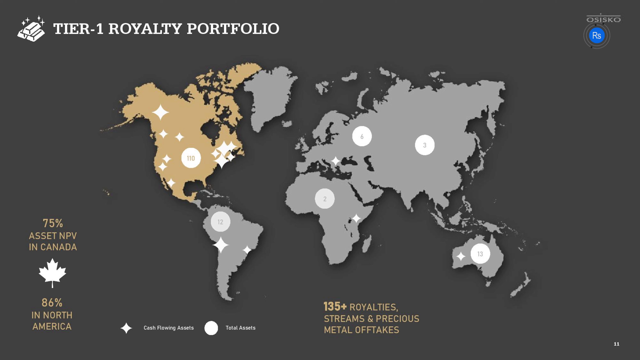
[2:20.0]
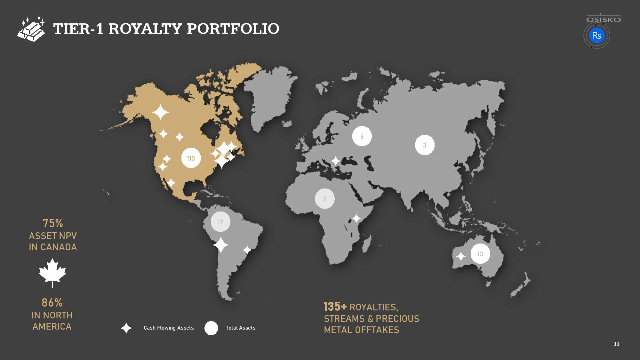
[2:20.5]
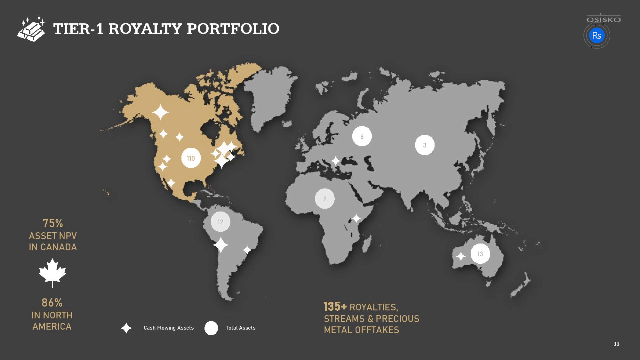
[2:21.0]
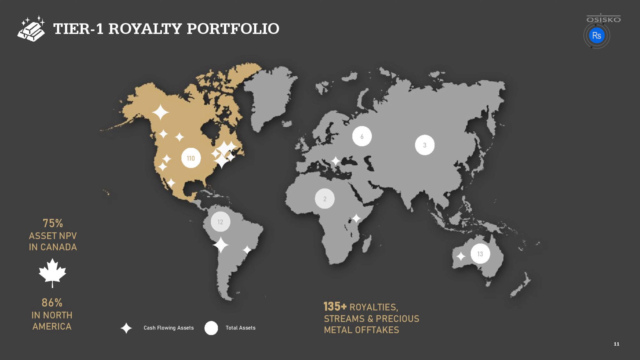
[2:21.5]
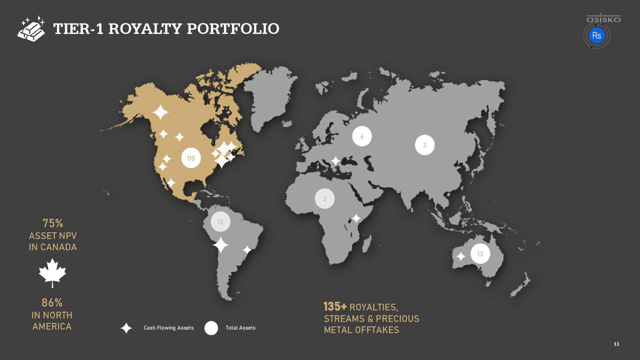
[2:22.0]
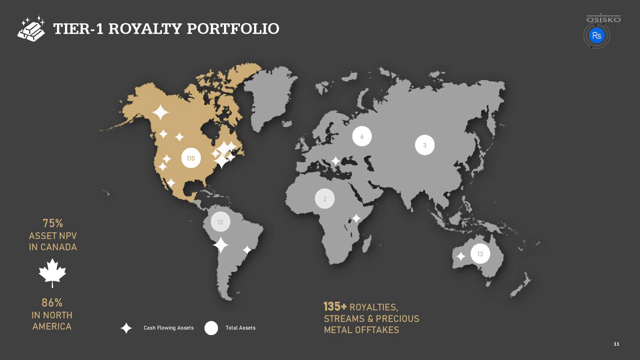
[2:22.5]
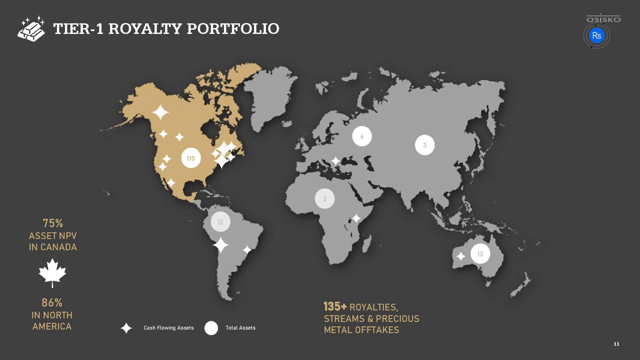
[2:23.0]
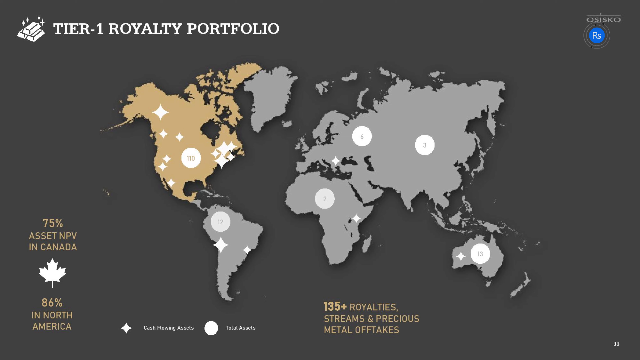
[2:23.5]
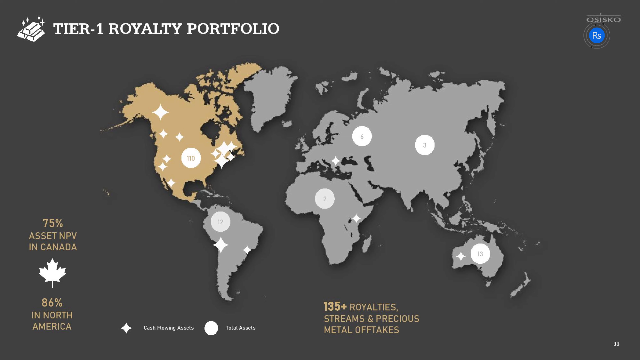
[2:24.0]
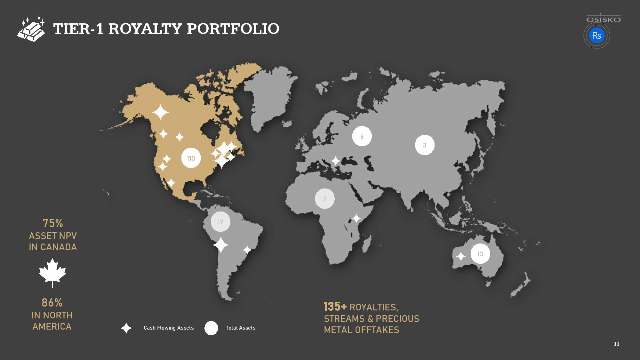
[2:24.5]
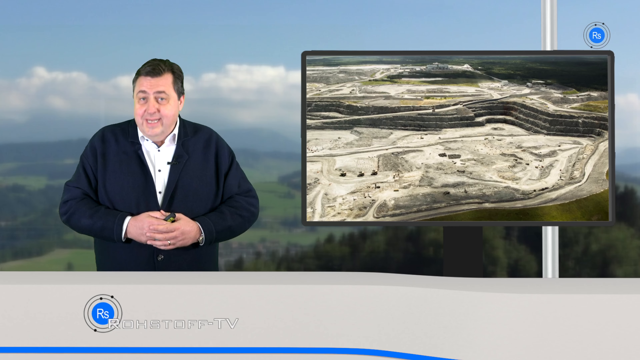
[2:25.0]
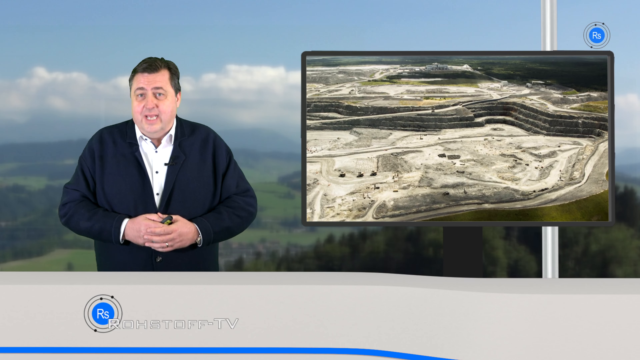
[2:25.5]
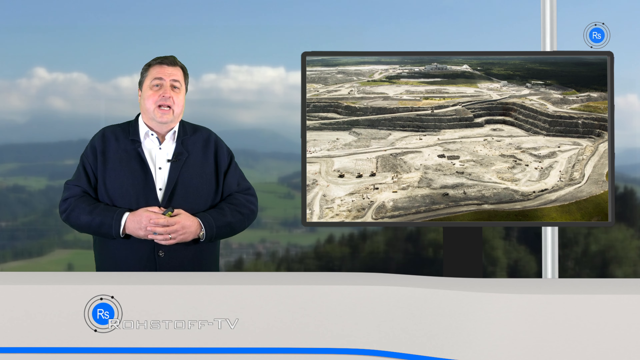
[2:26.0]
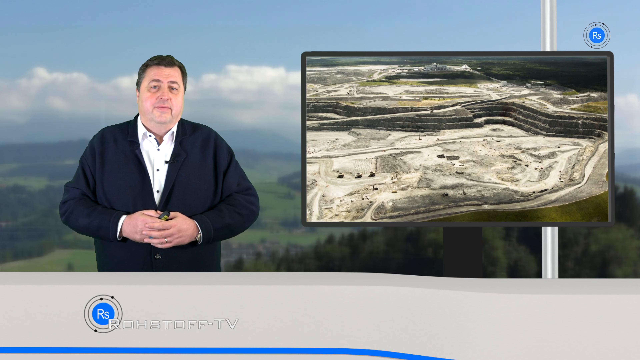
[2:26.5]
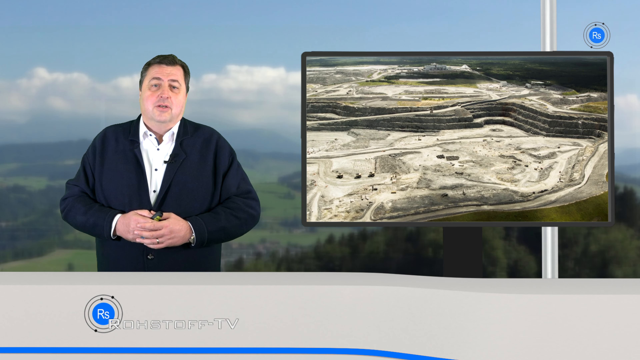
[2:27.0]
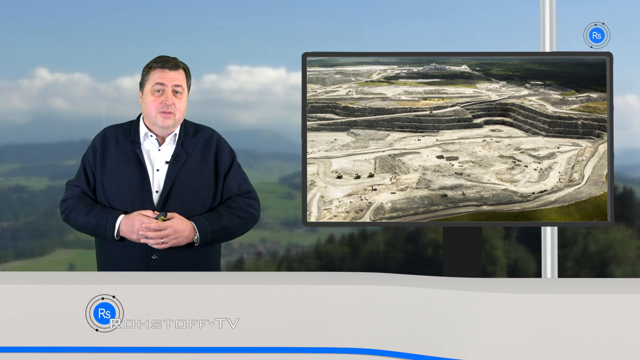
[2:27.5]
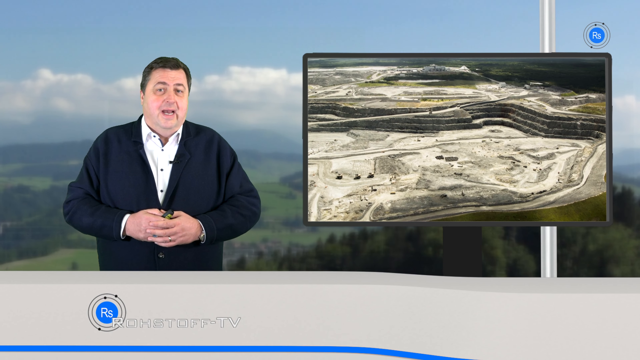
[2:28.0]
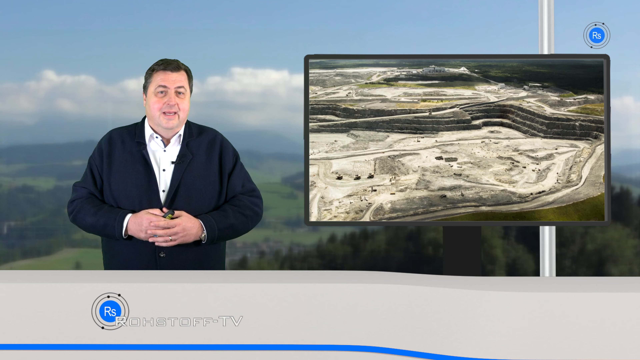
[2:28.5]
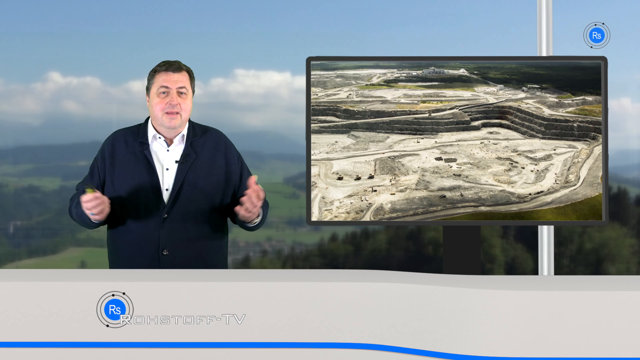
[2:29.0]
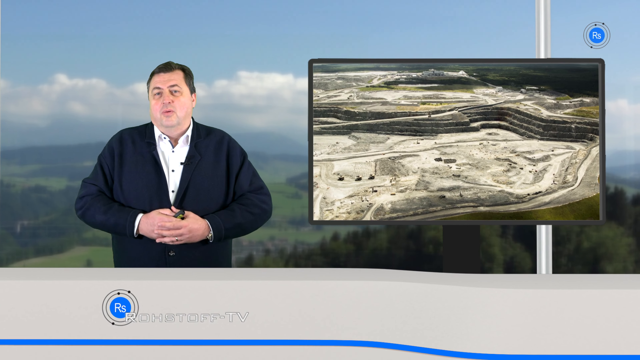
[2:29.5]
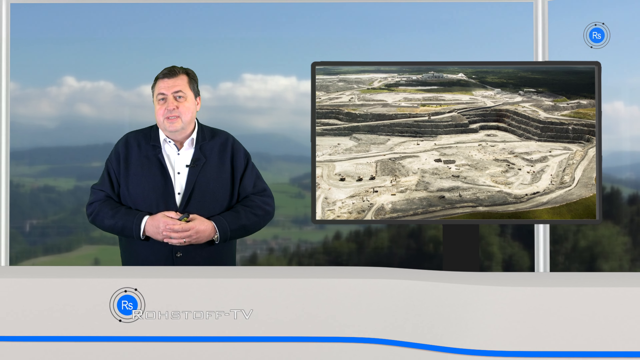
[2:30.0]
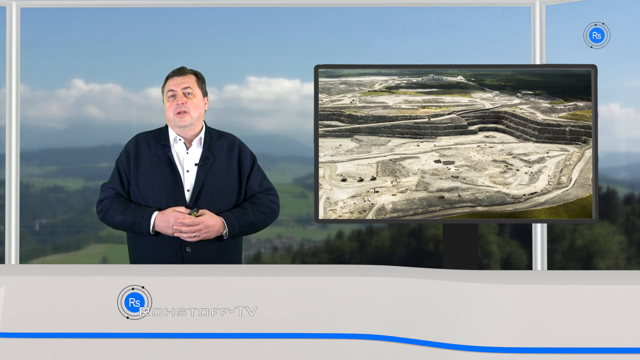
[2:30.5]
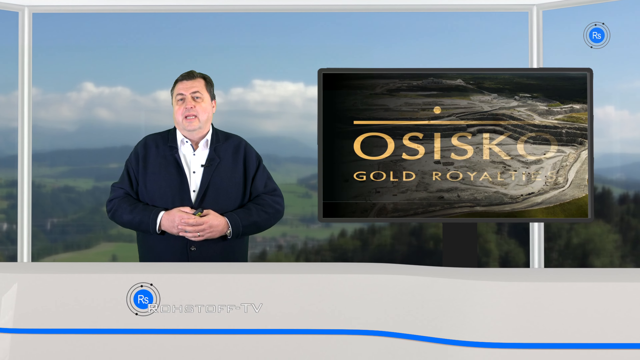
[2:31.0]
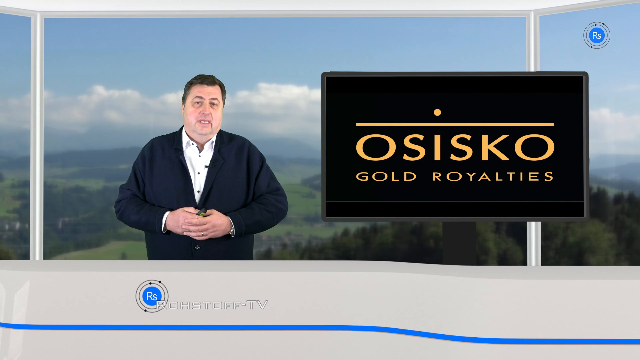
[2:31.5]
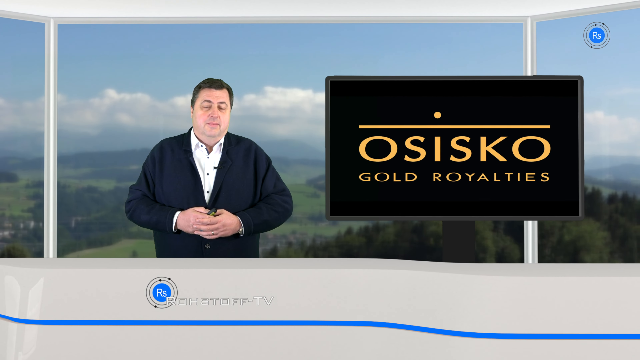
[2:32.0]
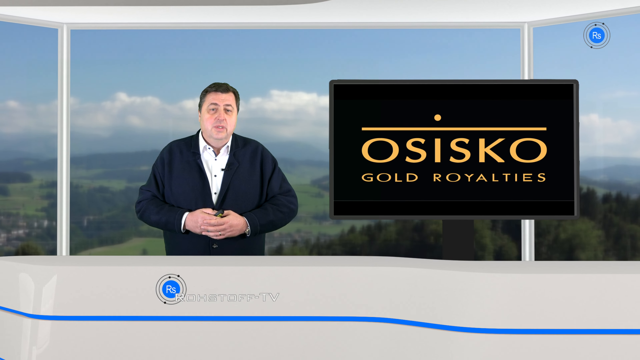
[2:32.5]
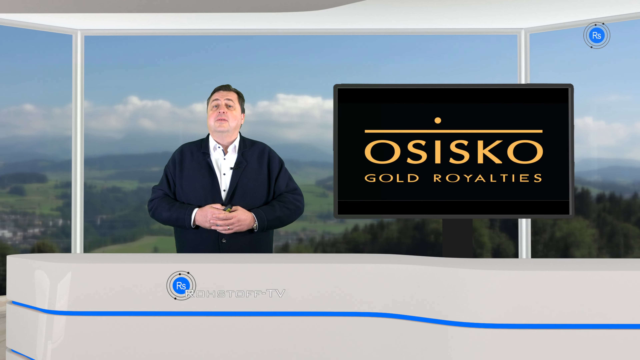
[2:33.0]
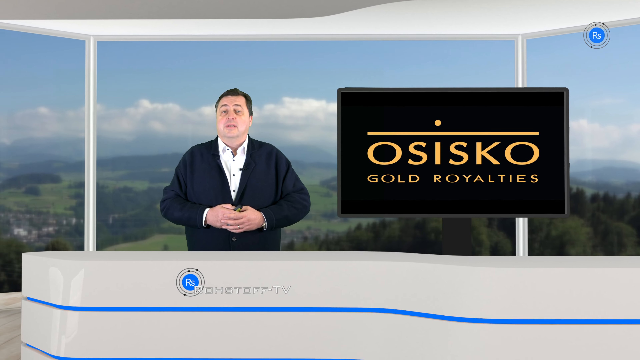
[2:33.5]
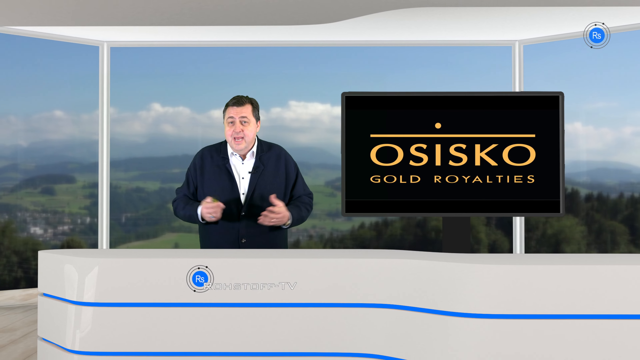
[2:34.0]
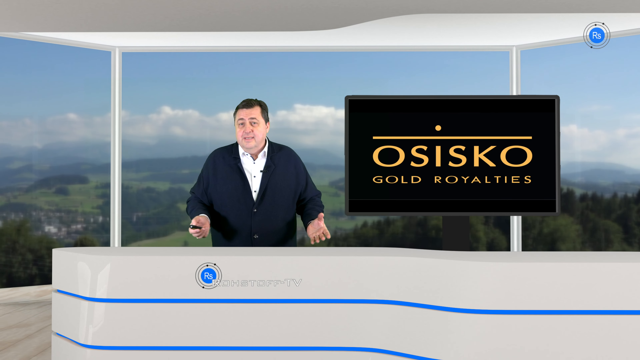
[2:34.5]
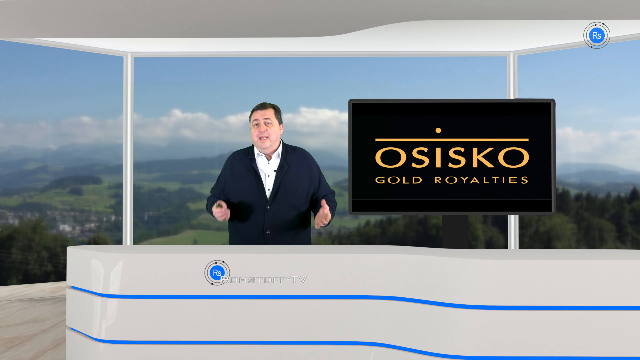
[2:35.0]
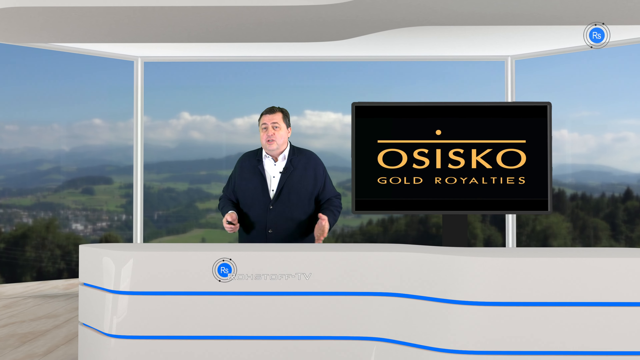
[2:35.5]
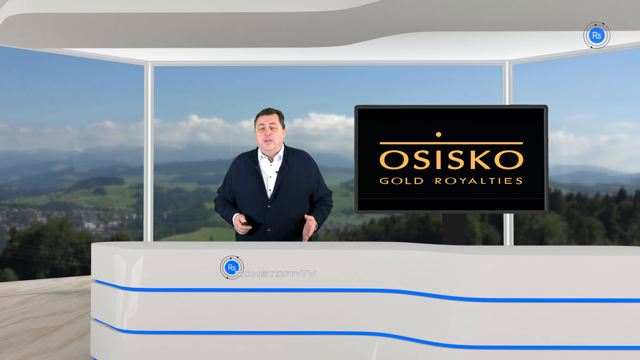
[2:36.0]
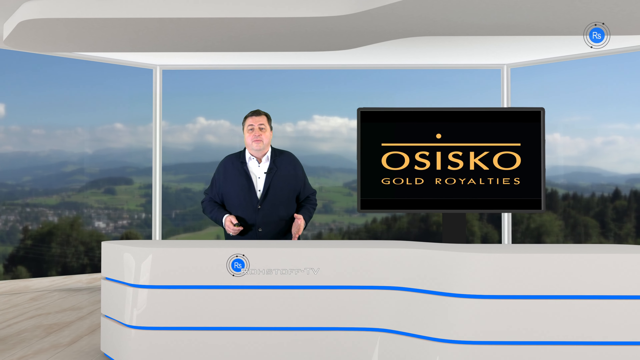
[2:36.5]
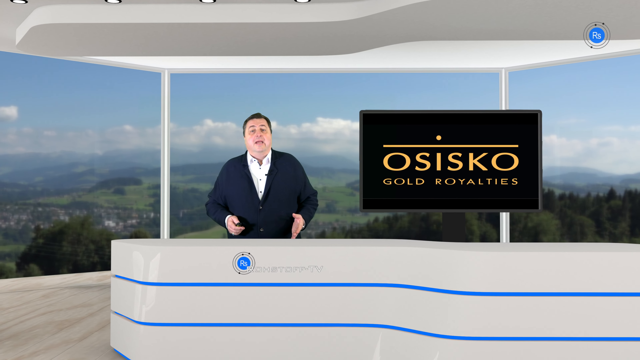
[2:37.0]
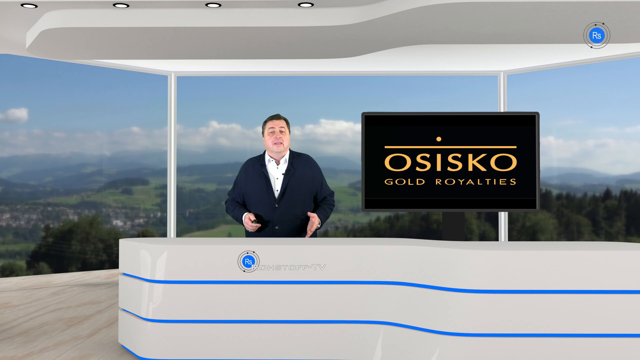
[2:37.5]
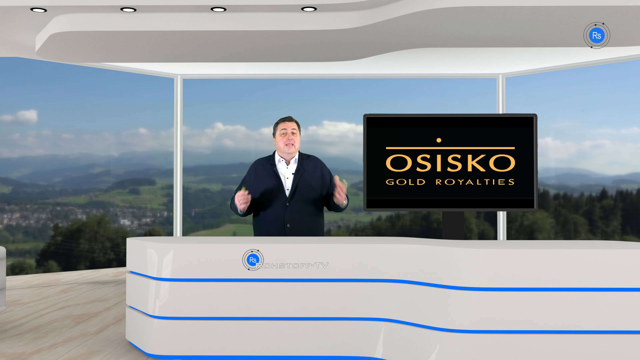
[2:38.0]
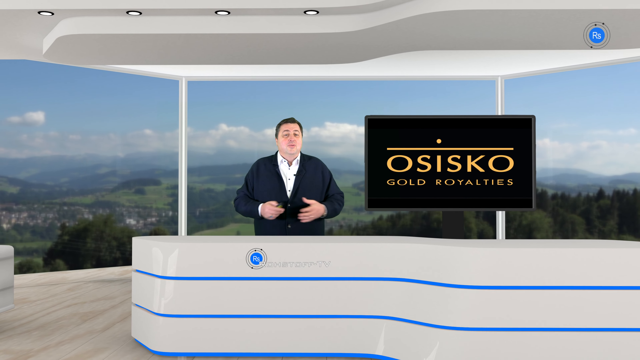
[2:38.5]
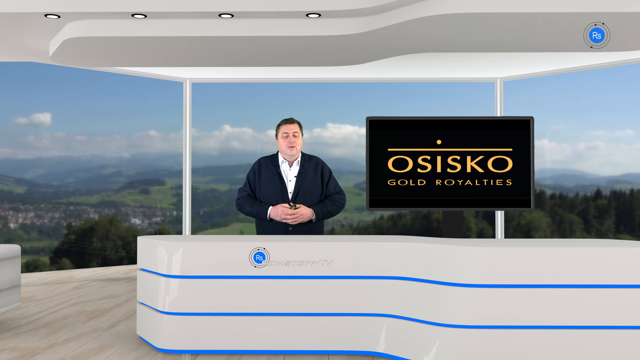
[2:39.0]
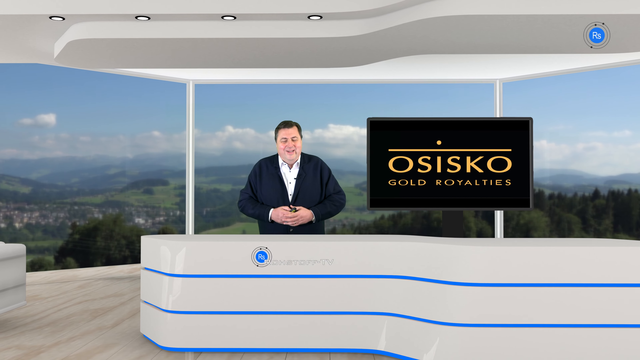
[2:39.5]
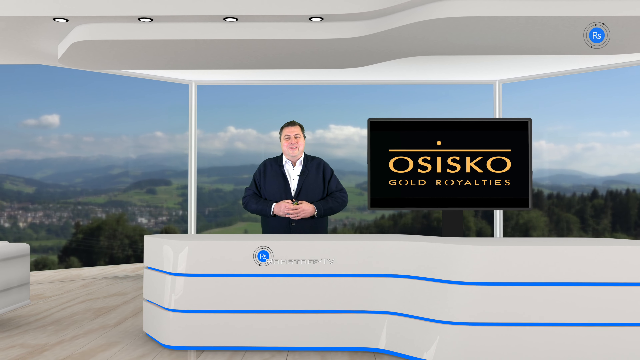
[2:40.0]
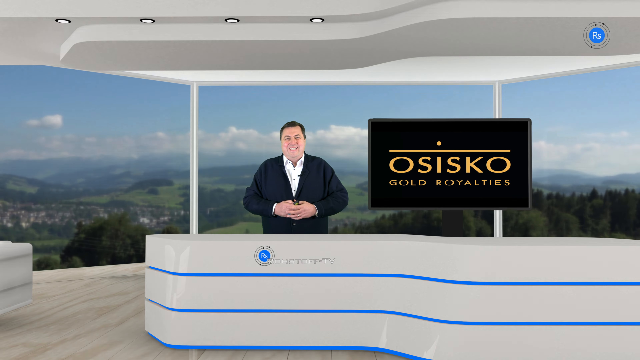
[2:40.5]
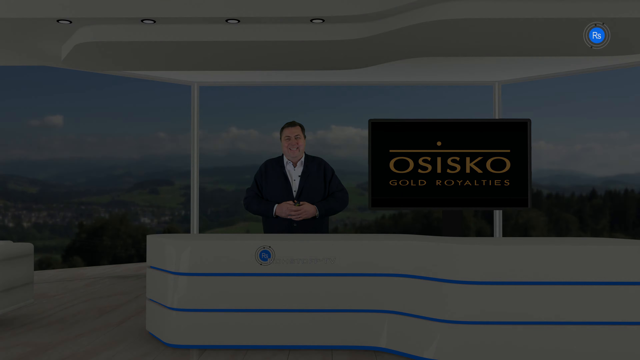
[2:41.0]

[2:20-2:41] A royalty portfolio map shows, apparently, the coverage of the company's royalties, with about 75 assets, a figure of 86%, and 135 royalty streams and precious metal offtakes. The map also shows the locations of some of the sites where the gold is mined.